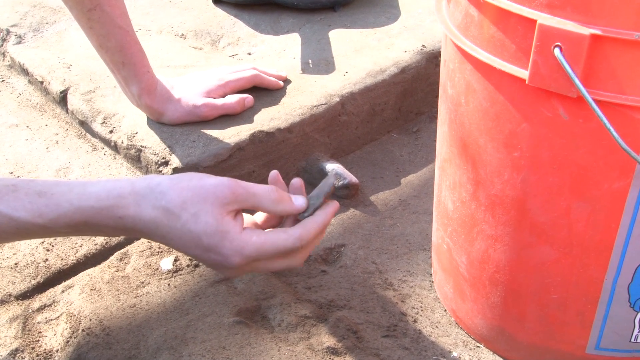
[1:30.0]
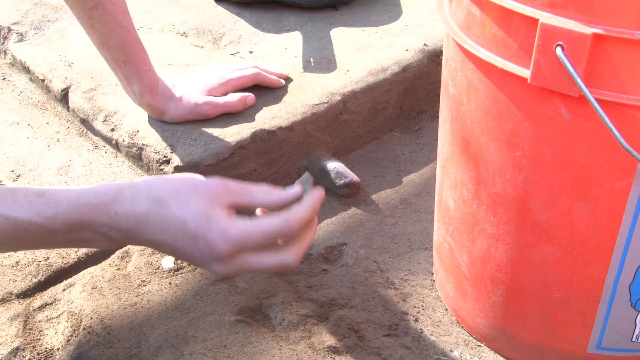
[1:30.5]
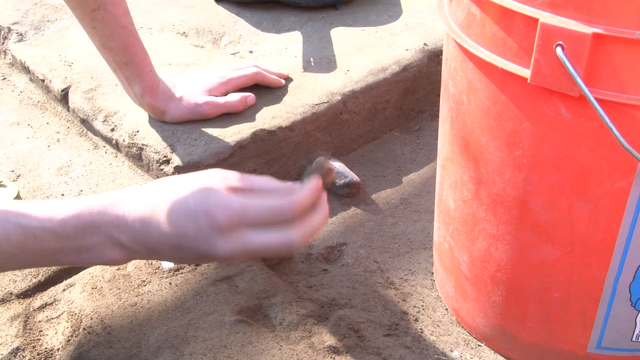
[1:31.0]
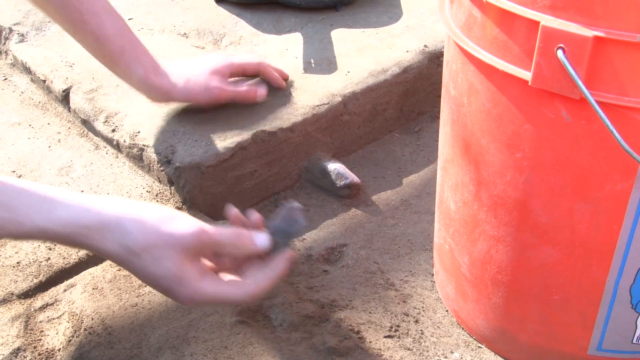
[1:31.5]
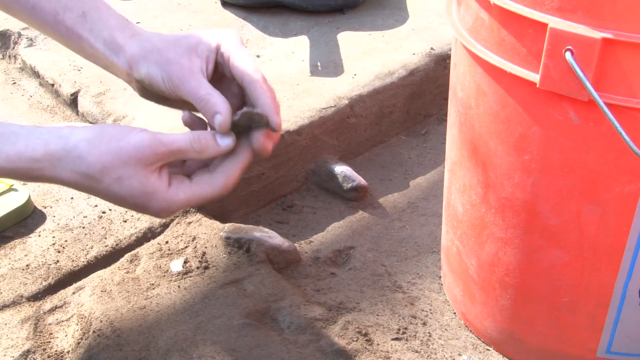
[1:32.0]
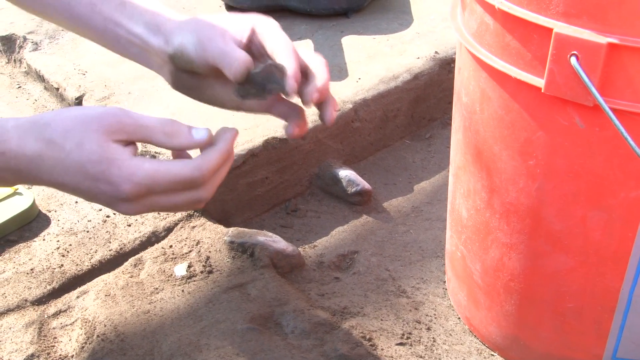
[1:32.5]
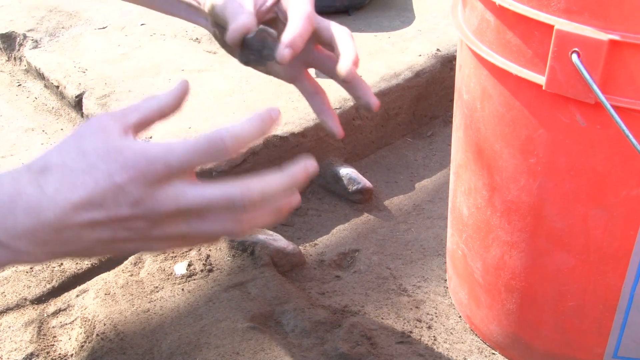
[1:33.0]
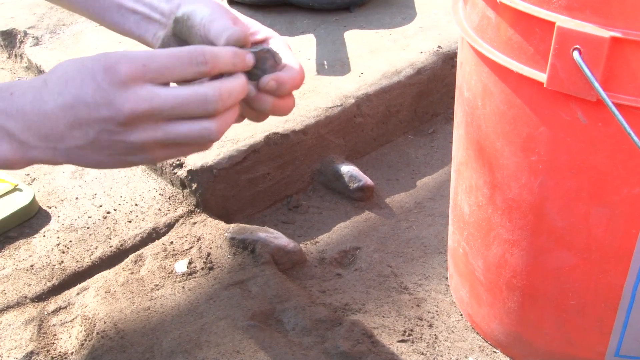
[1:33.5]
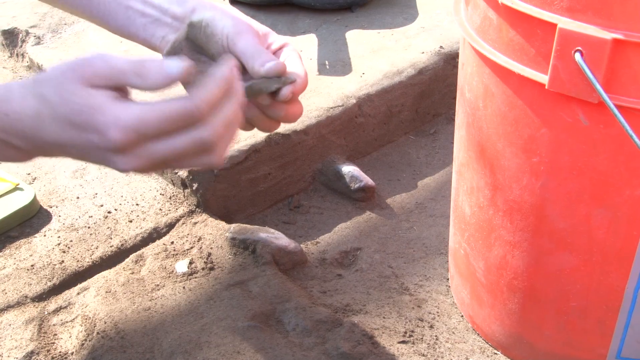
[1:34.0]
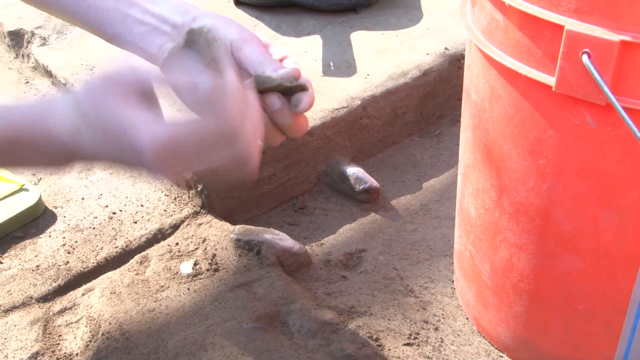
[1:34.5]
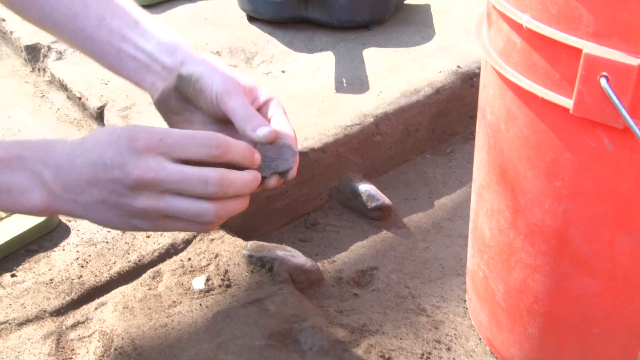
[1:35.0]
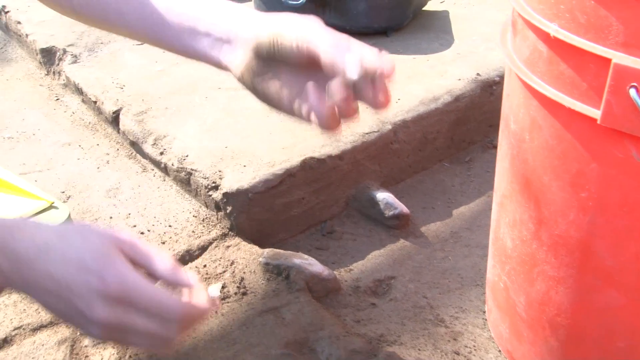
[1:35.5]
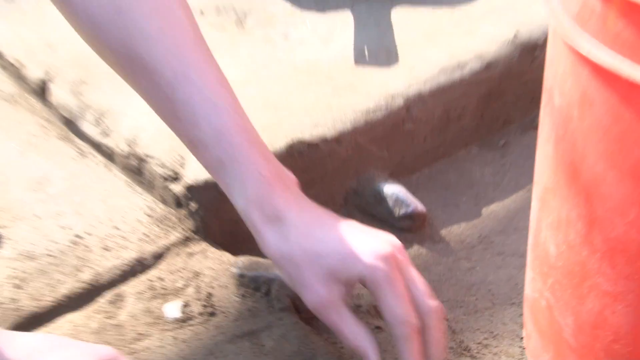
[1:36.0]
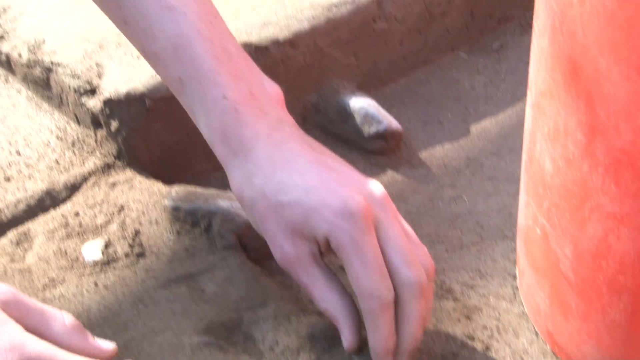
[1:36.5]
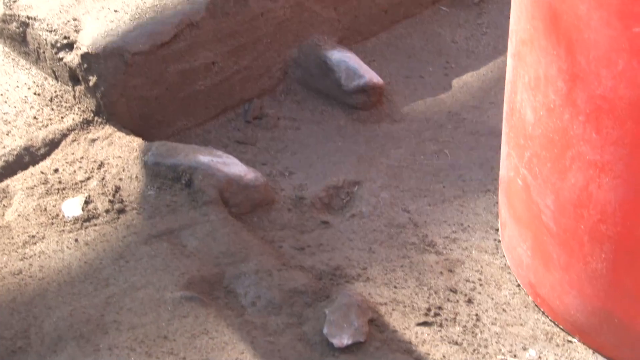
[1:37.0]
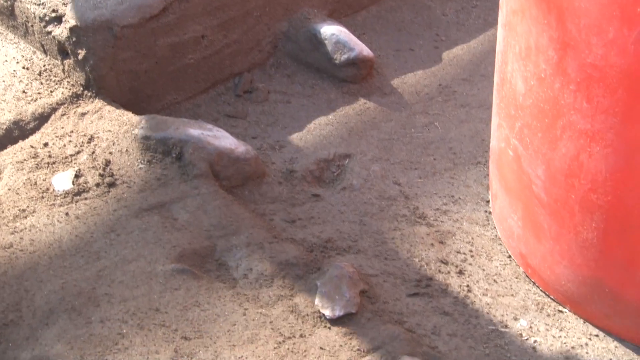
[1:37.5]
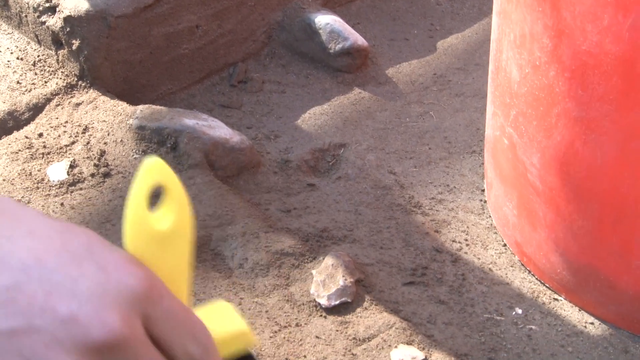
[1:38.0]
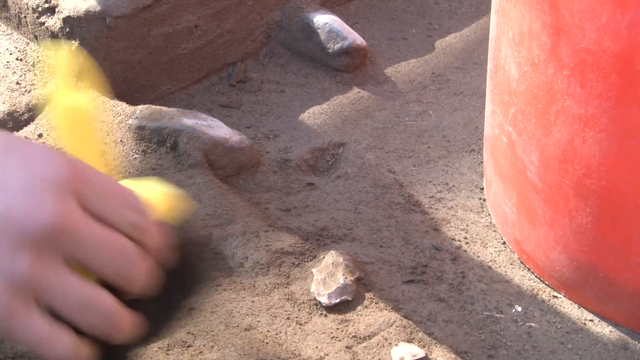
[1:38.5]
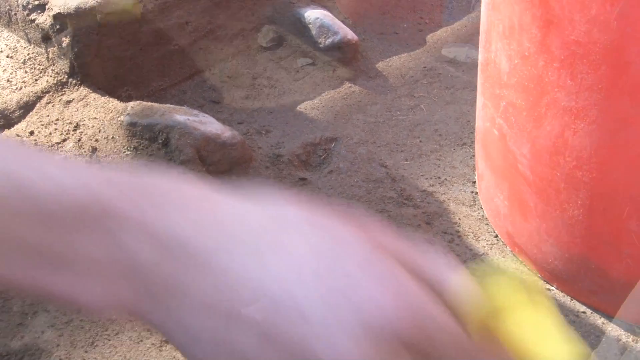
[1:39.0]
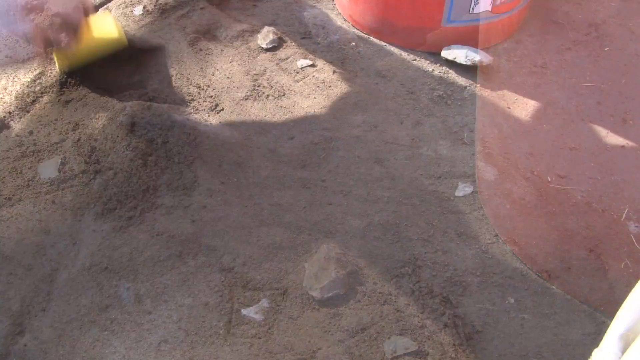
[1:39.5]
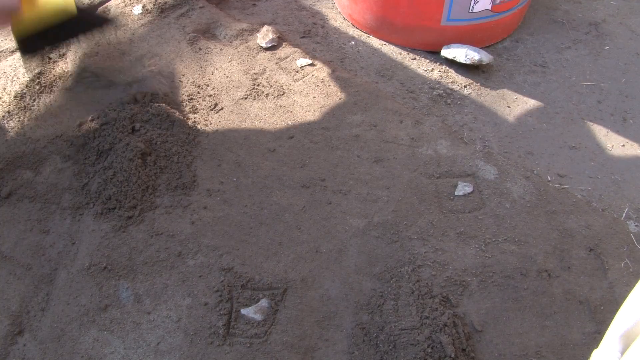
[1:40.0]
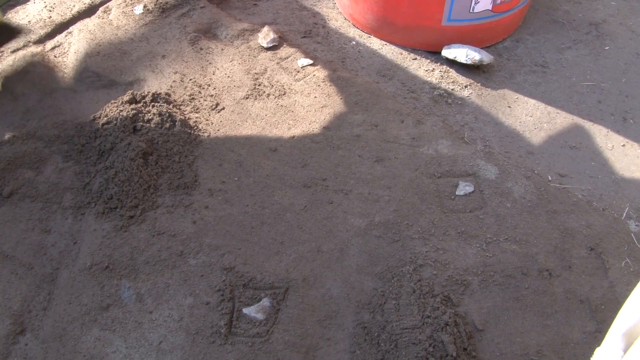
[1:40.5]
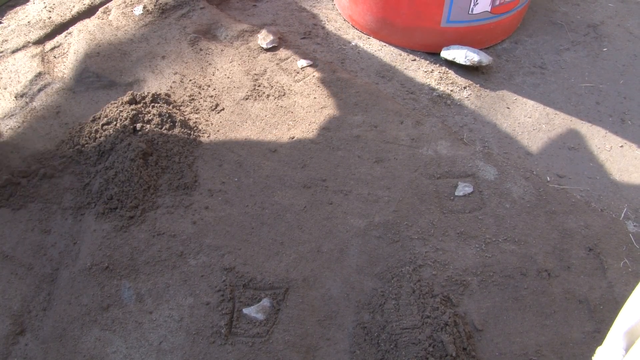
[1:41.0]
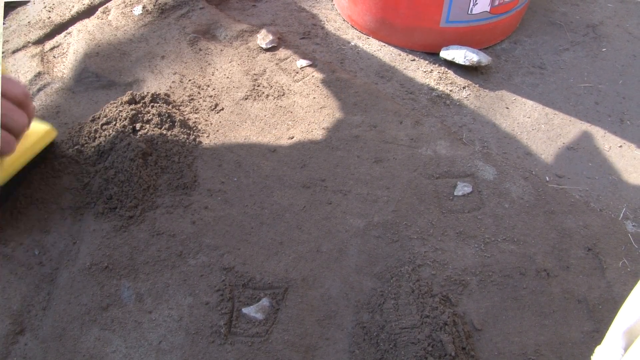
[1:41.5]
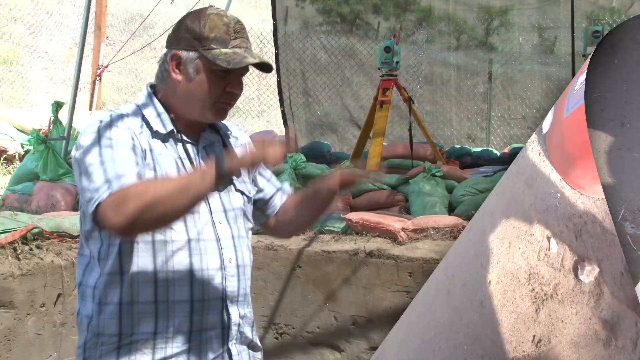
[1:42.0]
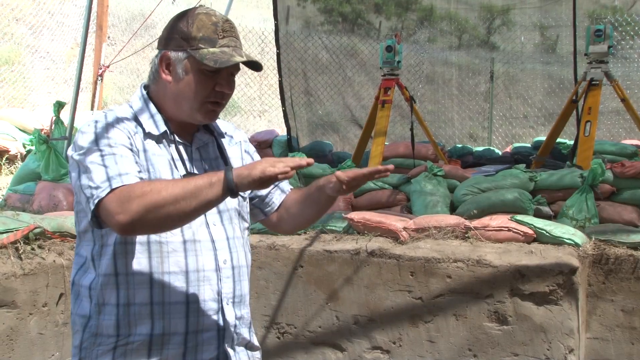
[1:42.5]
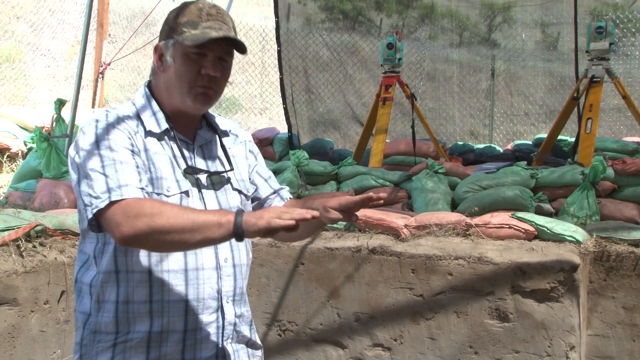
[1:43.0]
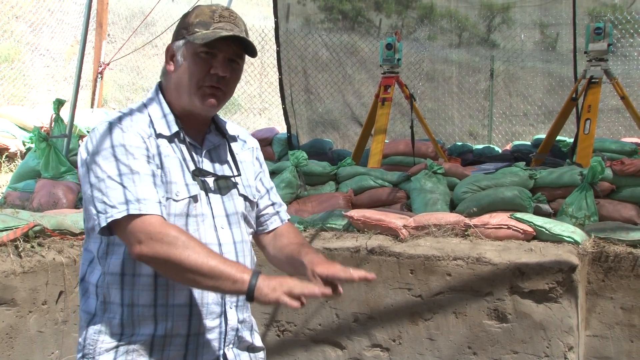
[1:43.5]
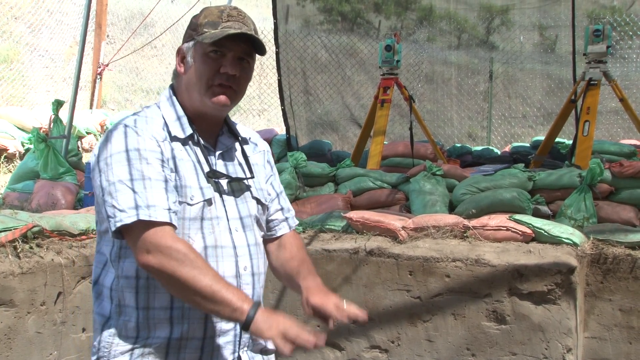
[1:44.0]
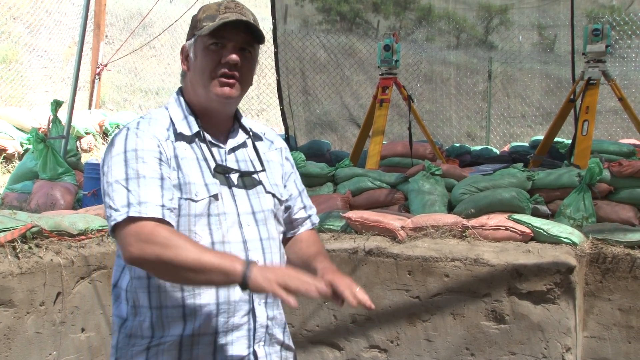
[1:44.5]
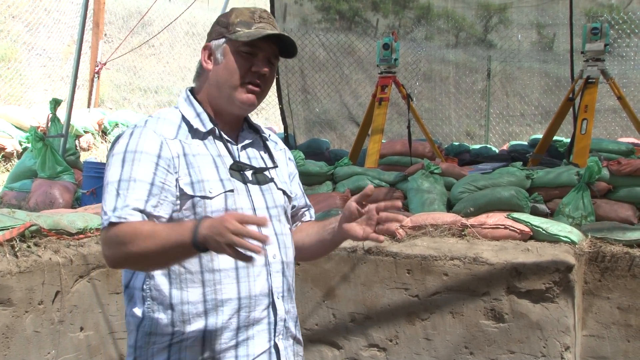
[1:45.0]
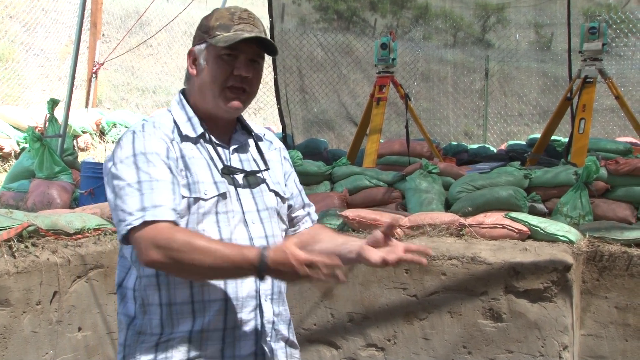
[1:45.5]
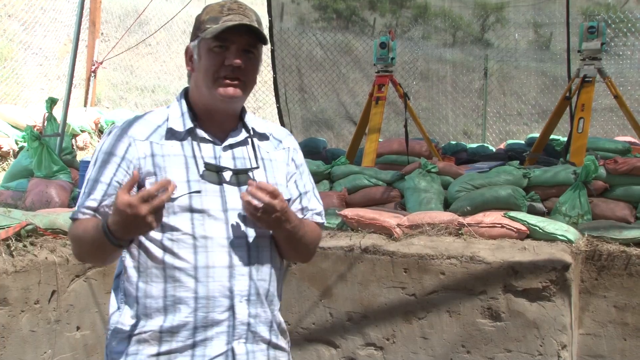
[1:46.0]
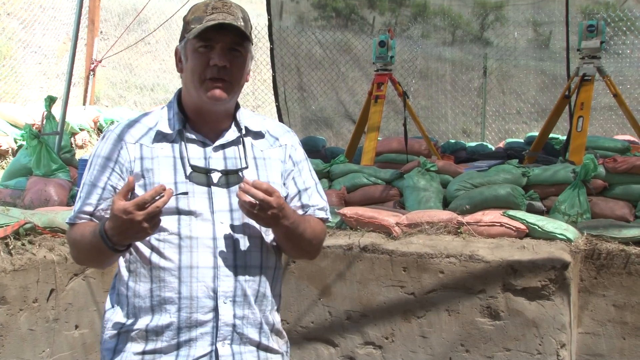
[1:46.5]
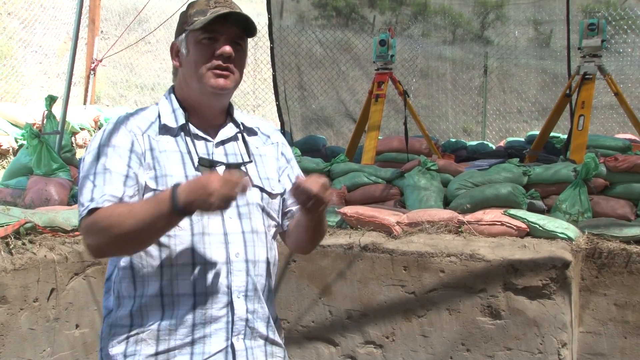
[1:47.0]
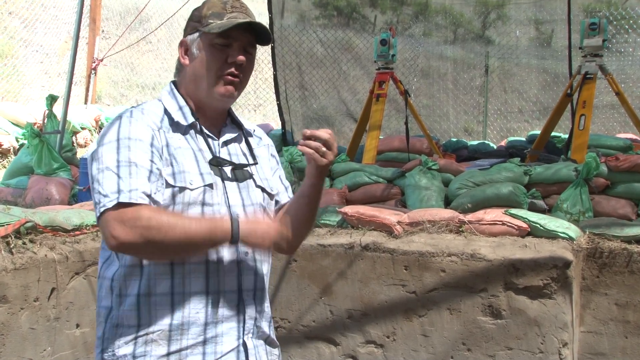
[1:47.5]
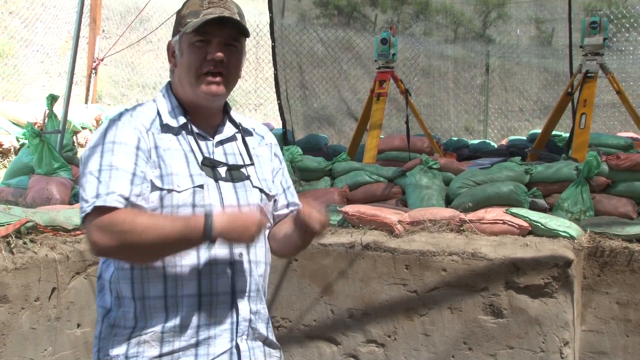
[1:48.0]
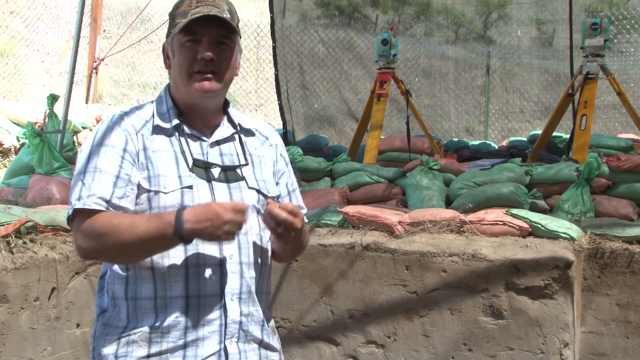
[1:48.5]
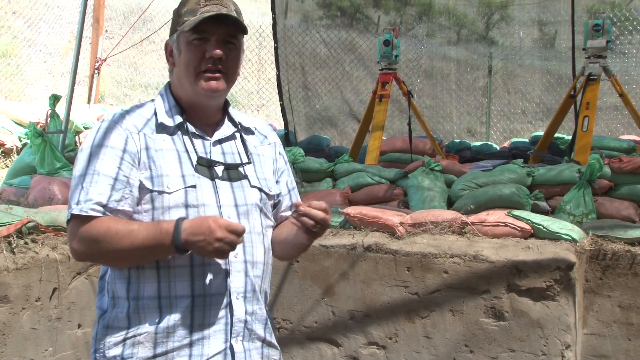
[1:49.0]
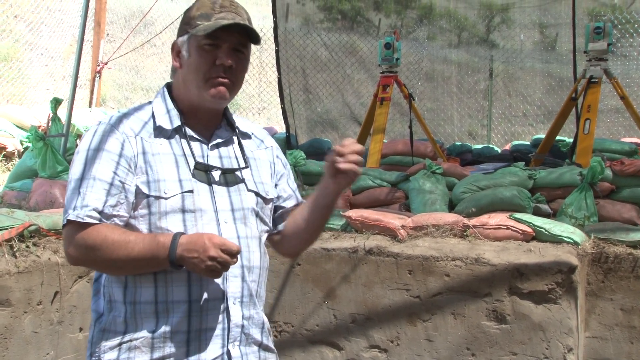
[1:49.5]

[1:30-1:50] A student, apparently Ian, holds up a special rock and handles it in his hand, something he has just excavated. Someone brushes with a yellow brush that has black bristles. The view cuts back to the professor, who wears a baseball cap and a white shirt with a little blue striping; his sunglasses are not on his face but around his neck. The camera tripods, the green sandbags and the netting tent are in the background. The view returns to the red bucket and to Ian with what he has found. It is a sunny day, with some reflection of light. Something that looks like a pan, possibly a dustpan, is to his left.